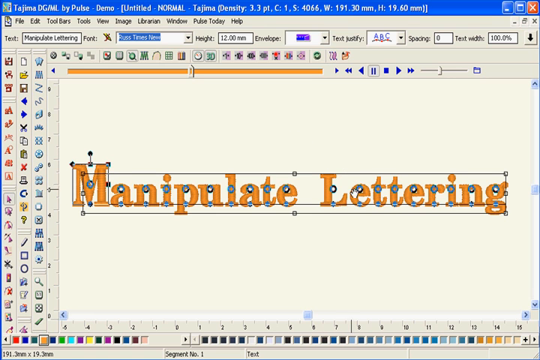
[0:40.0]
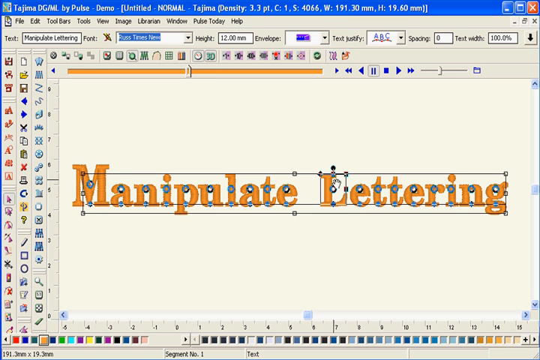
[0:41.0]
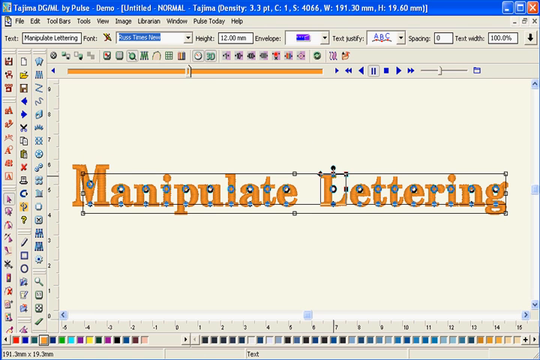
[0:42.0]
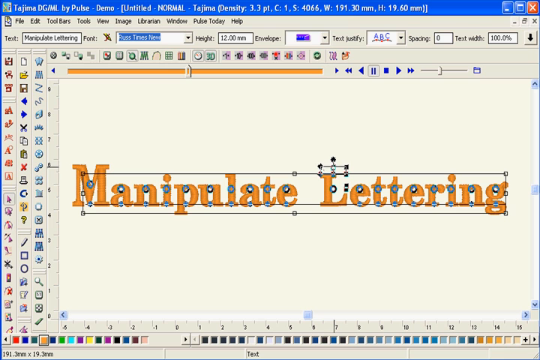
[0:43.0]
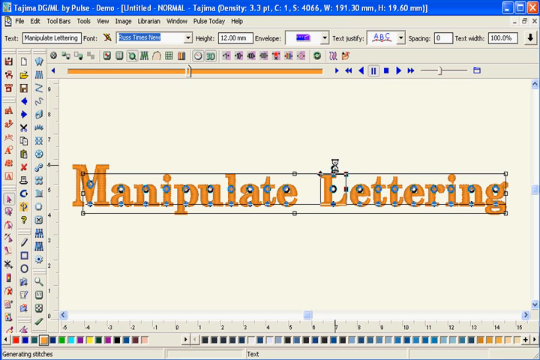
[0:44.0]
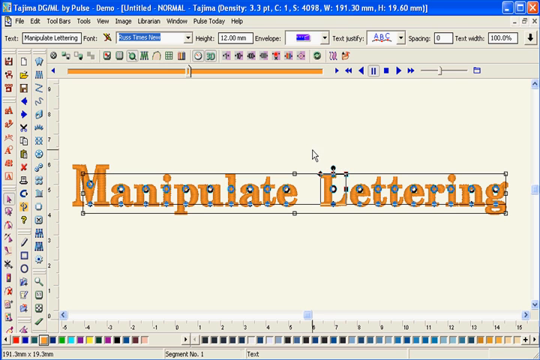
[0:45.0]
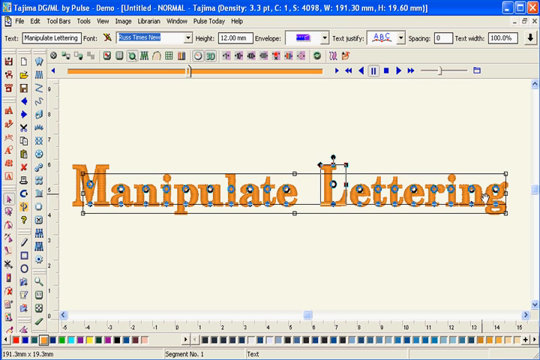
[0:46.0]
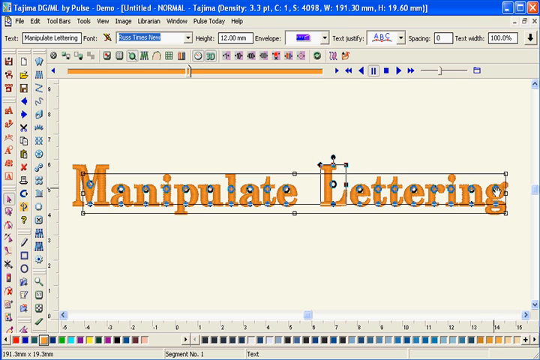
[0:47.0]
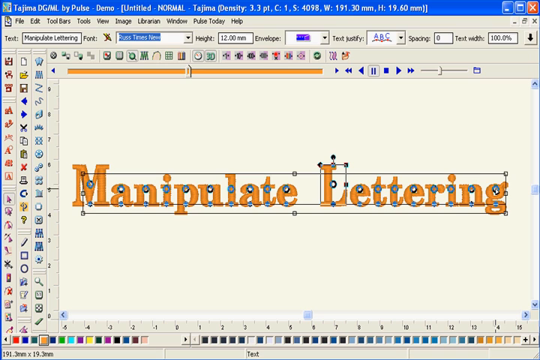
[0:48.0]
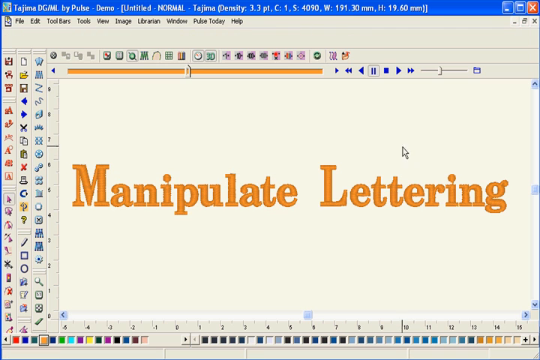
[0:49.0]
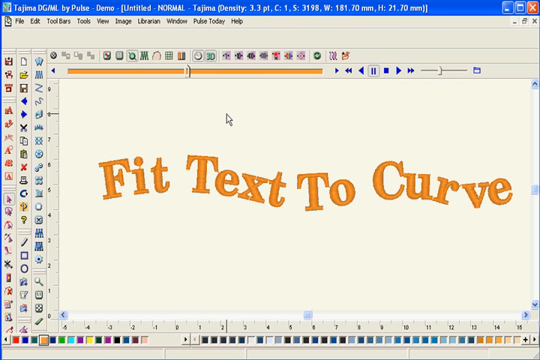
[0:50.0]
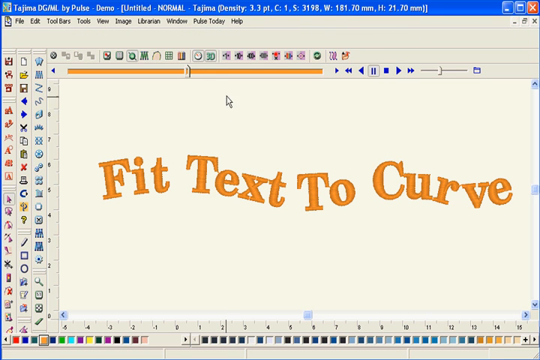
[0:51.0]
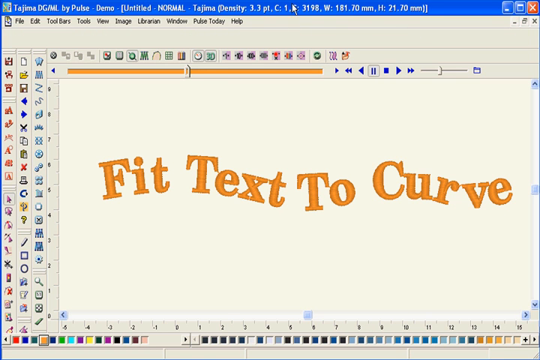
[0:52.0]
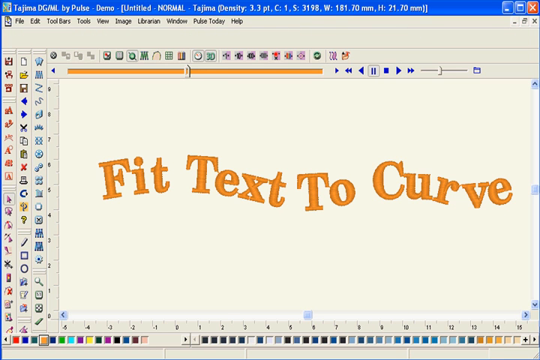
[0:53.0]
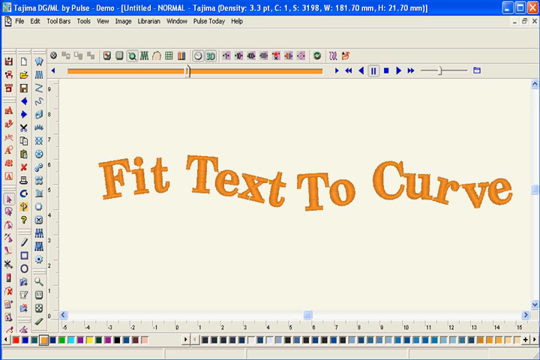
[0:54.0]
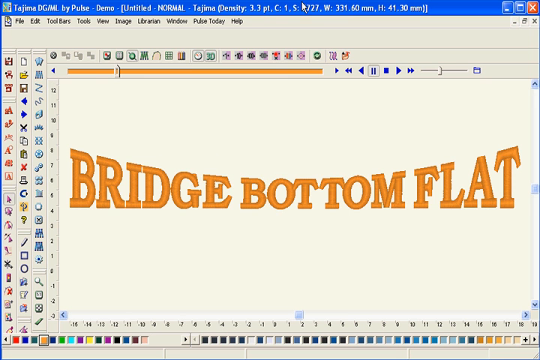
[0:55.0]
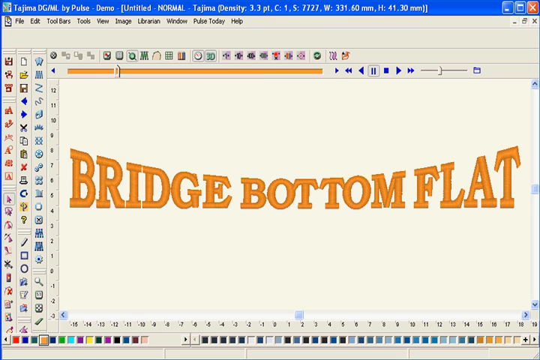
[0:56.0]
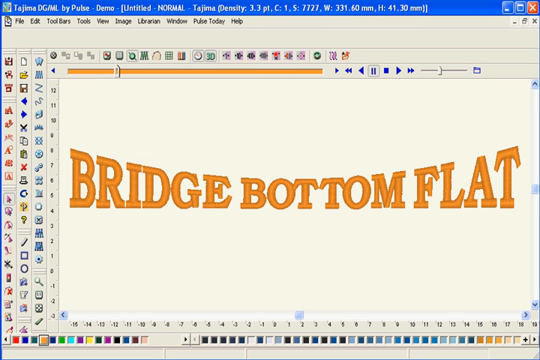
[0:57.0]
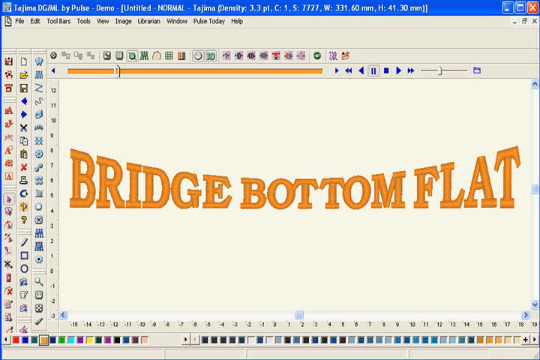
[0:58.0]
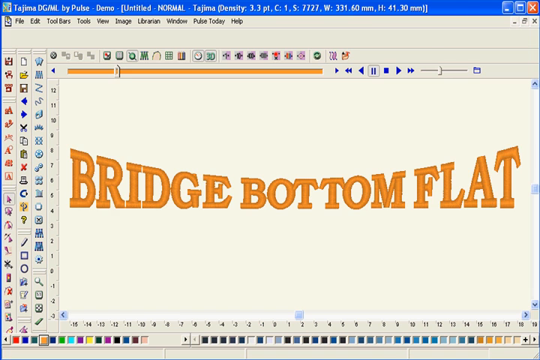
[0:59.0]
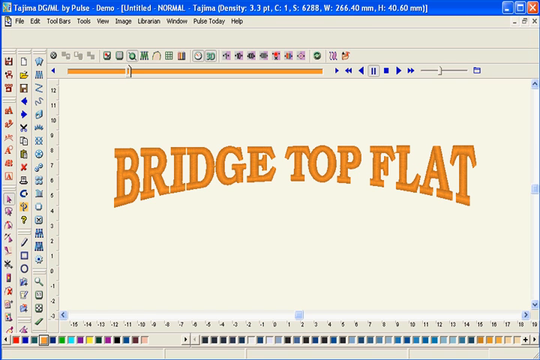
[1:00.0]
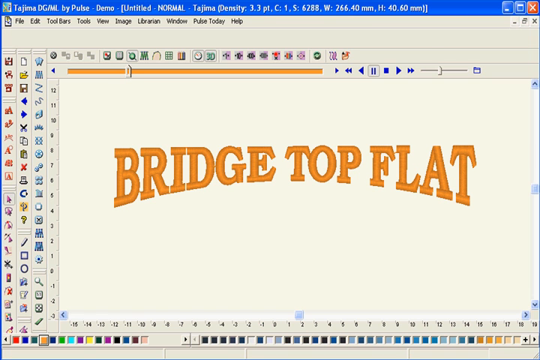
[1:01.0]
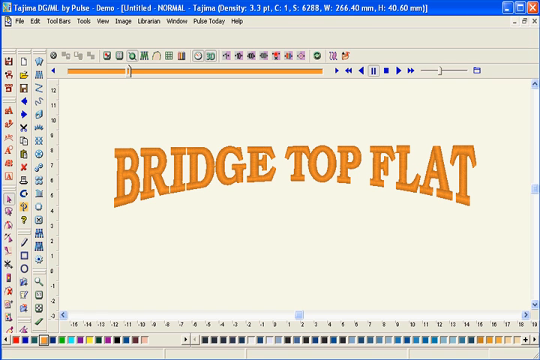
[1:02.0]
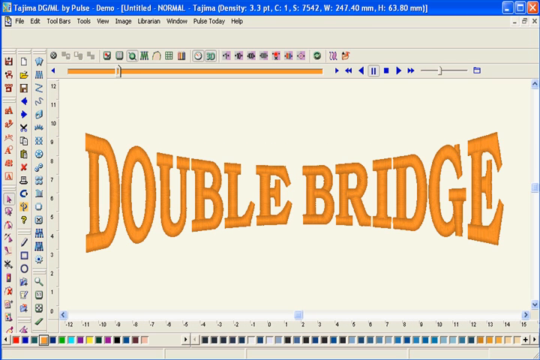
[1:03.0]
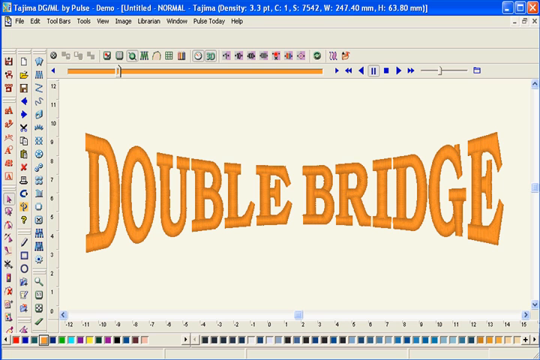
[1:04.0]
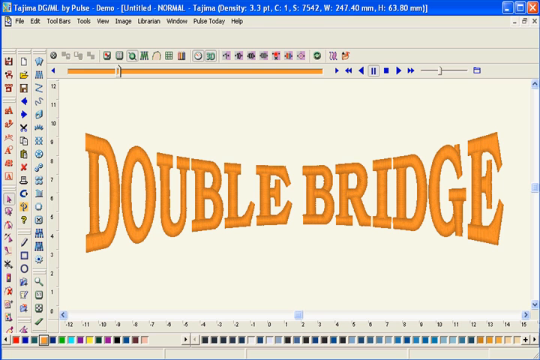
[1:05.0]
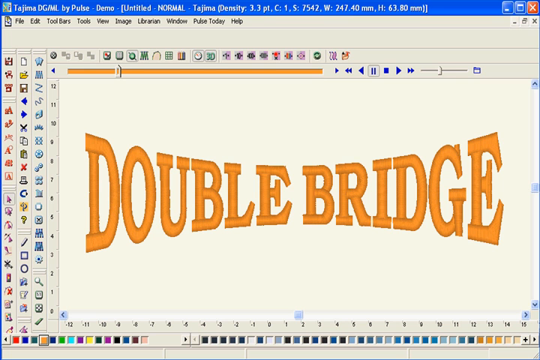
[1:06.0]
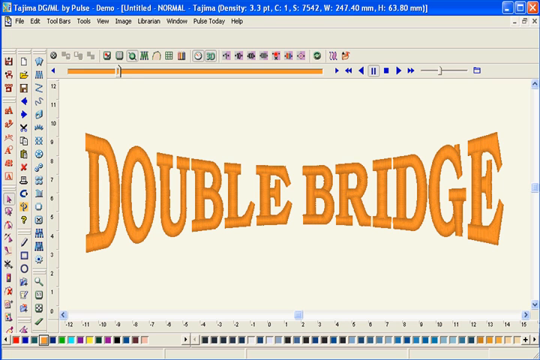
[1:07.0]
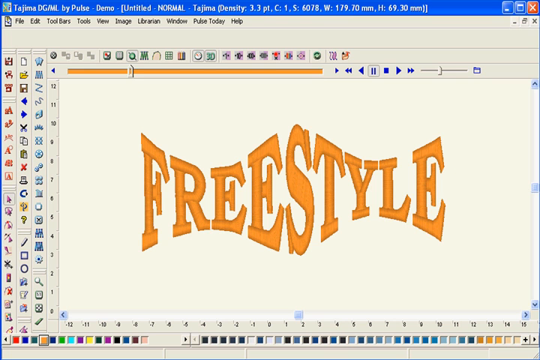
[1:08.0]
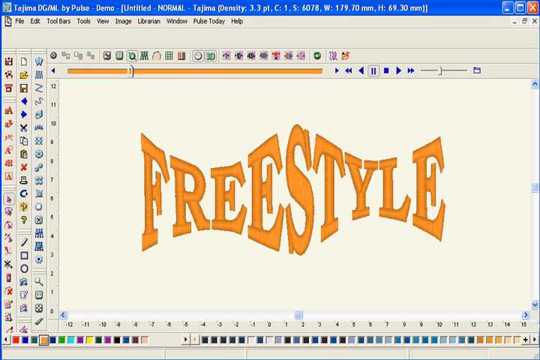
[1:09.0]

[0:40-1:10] A beige page is open, with many tools across the top and down the left side. At the top, the words "manipulate" and "lettering" sit side by side, both in orange. The letters are manipulated so that the L in "lettering" becomes larger and the M in "manipulate" becomes much taller. The video then cuts to the text "fit text to curve." Instead of running straight across horizontally, "fit" rises a little, "text" points slightly downward, "to" curves upward, and "curve" forms a whole curve of its own: the C is straight, the R points downward, and the V and E point upward. Next comes "bridge bottom flat," where the letters are bigger at both ends and skinnier in the middle. Then "bridge top flat" appears, which looks somewhat spread out. After that, "double bridge" shows letters that are very big and also spread out. Finally, "freestyle" appears and is made even bigger.